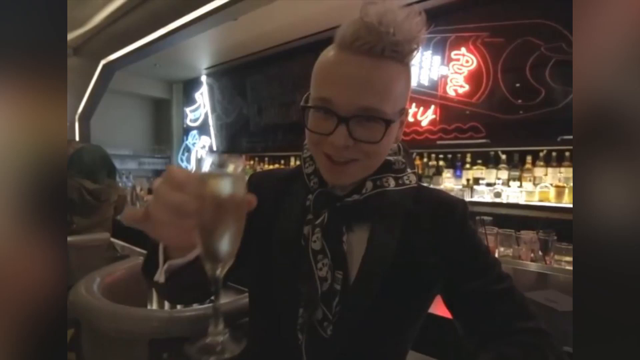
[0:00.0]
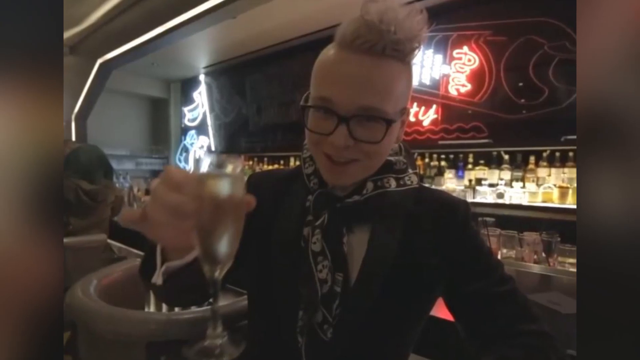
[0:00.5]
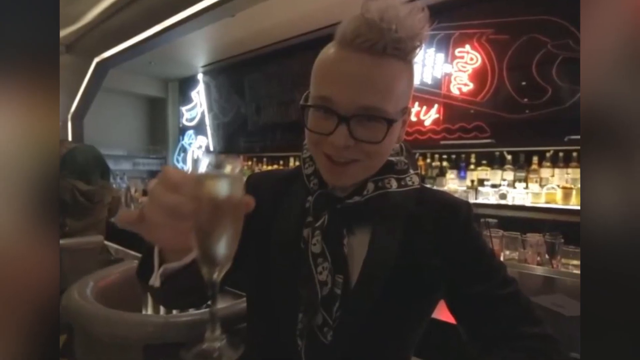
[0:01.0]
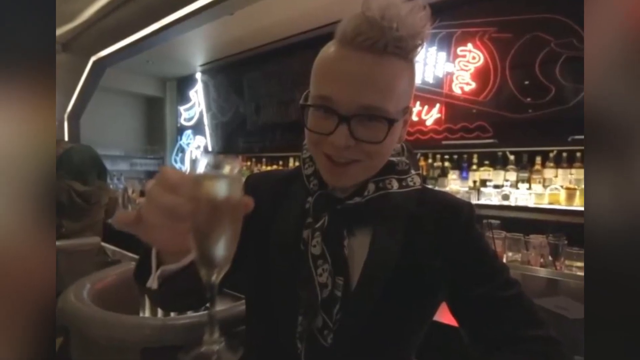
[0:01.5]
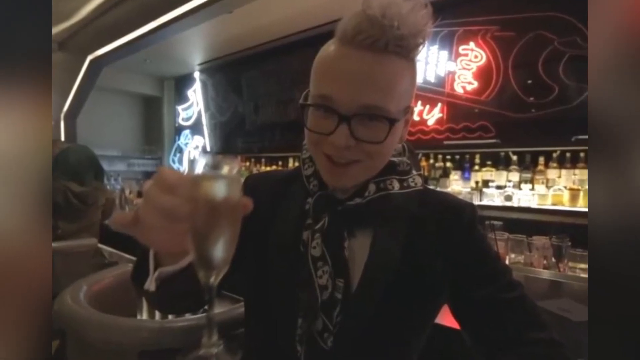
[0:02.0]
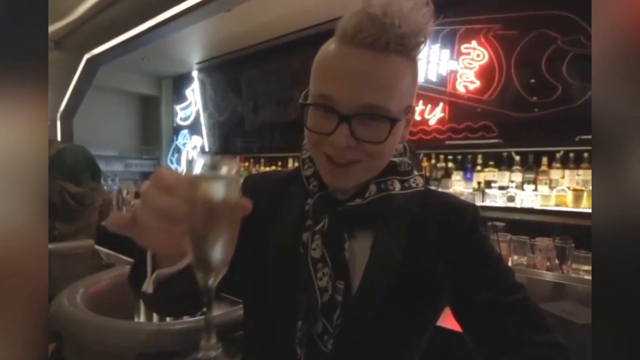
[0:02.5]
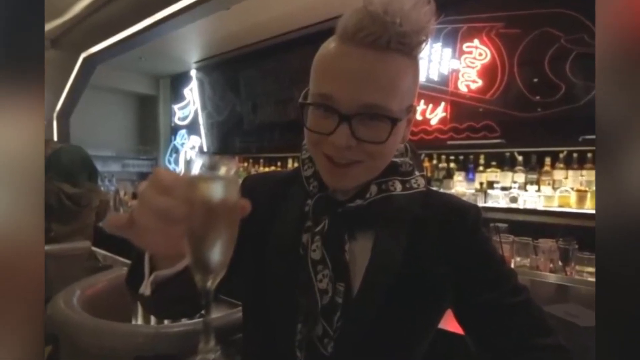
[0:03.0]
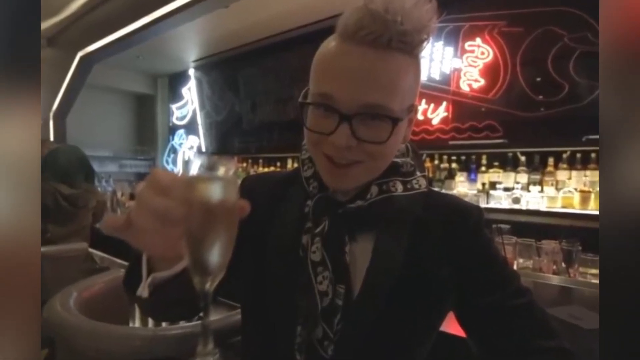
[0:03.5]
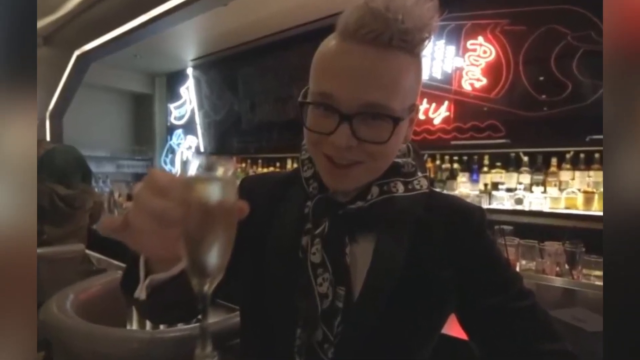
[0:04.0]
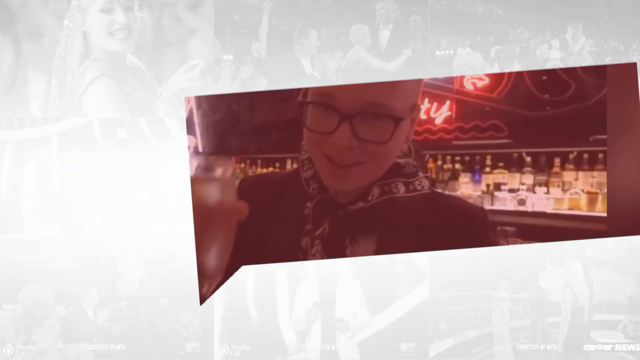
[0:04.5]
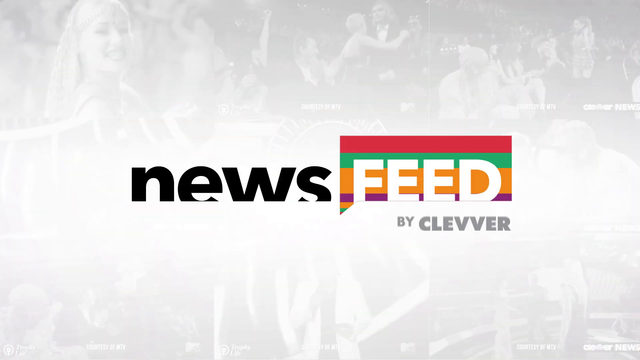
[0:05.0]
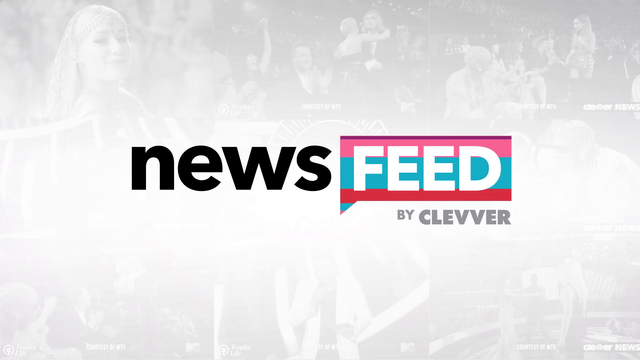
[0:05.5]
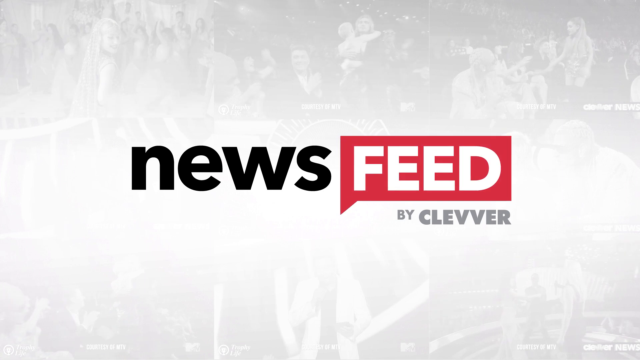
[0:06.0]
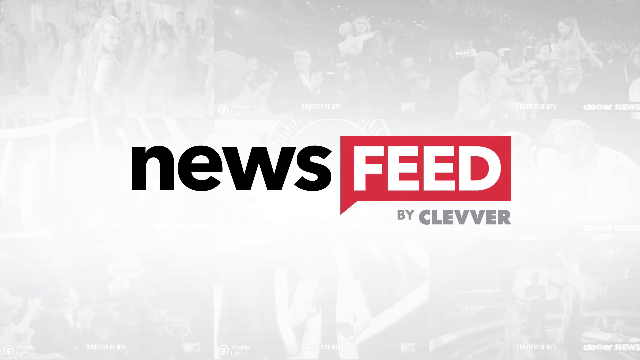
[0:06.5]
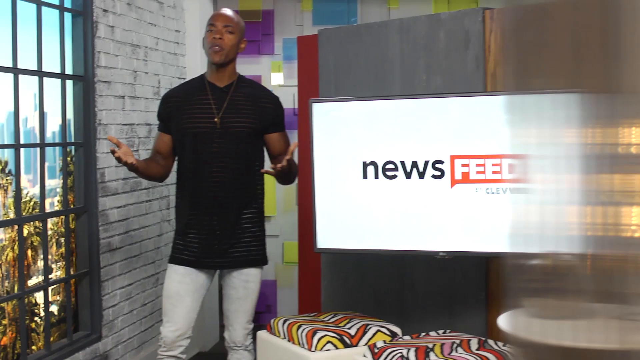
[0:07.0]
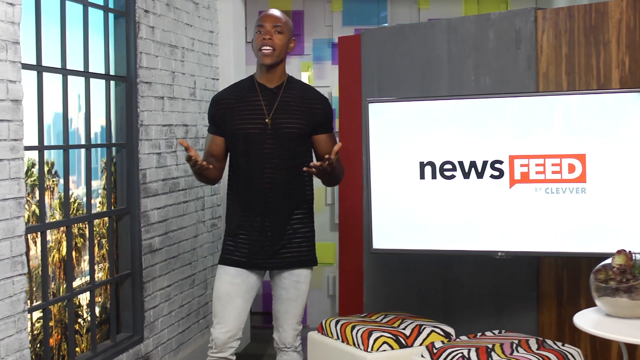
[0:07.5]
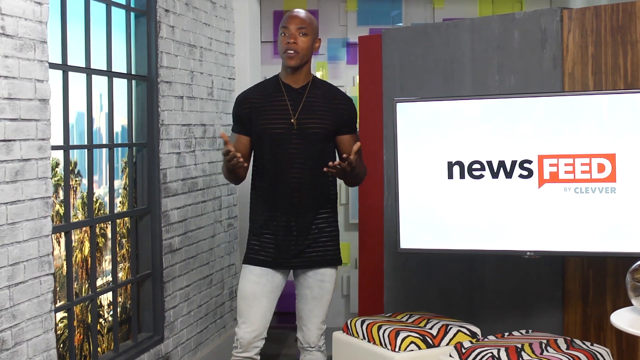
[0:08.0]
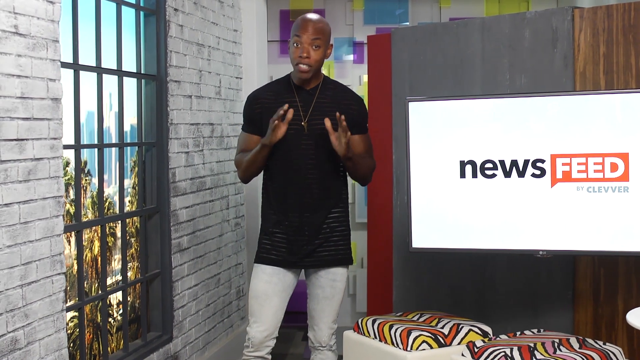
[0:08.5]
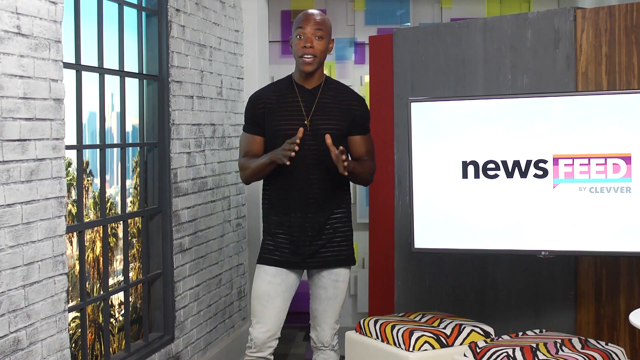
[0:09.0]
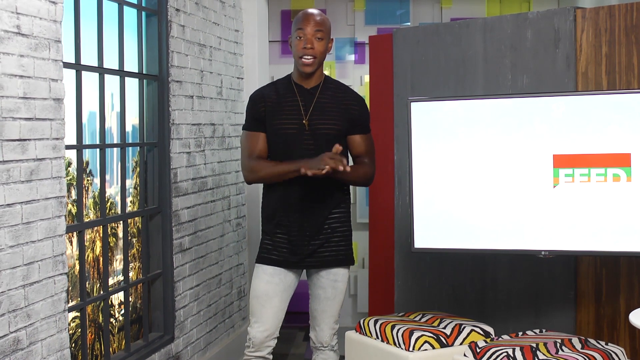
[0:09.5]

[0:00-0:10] The camera pans in slowly and closely on a person with a blonde mohawk who looks like they may be in a bar, holding up a glass of clear liquid in what looks like a little champagne flute. The person wears a dark blazer, a black and white scarf or kerchief tied around their neck, and black-framed glasses. Neon lighting is visible in the background. That gives way to an all-white graphic: in black lowercase letters it says "news," then in a red text box, in white capitals, "FEED." Underneath, in smaller gray text, it says "BY CLEVER," with "CLEVER" in bolder capitals. Next comes a graphic with that same background on a TV screen to the right and a man standing to the left of it. He is young, Black and bald, and wears a short-sleeved black t-shirt, what look like white pants, and a gold chain. To his left is a white brick wall with a gridded window through which the outside is visible. He appears to be giving some kind of news report.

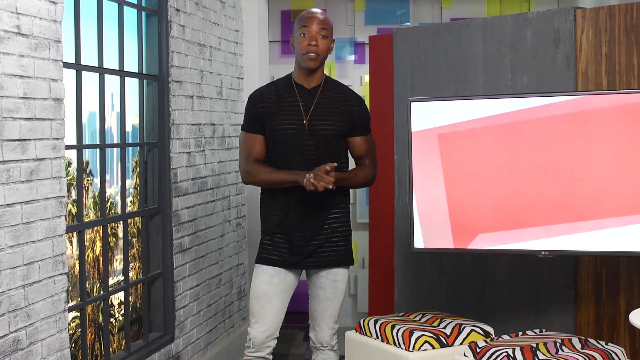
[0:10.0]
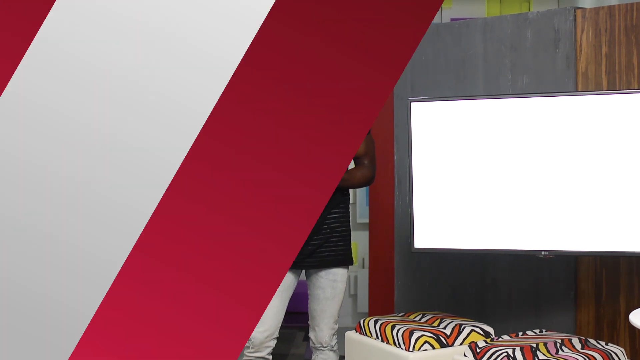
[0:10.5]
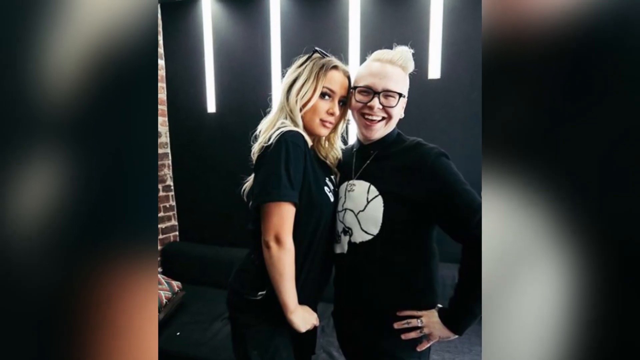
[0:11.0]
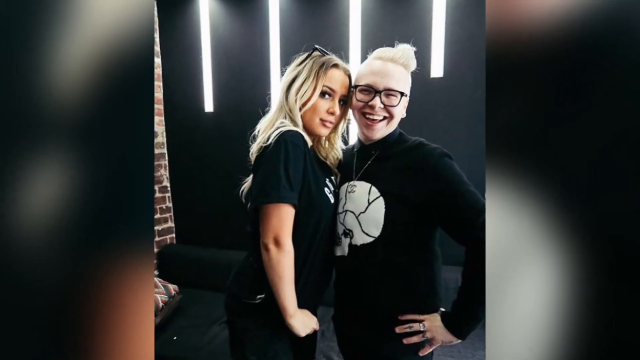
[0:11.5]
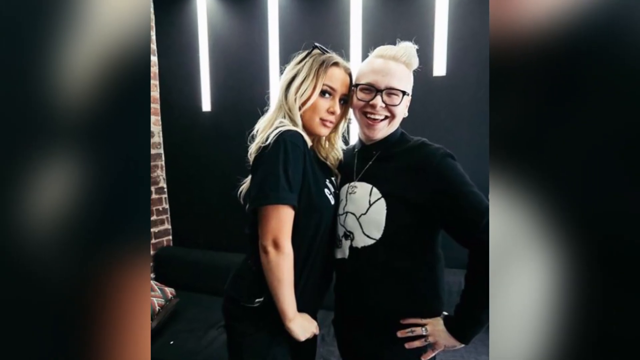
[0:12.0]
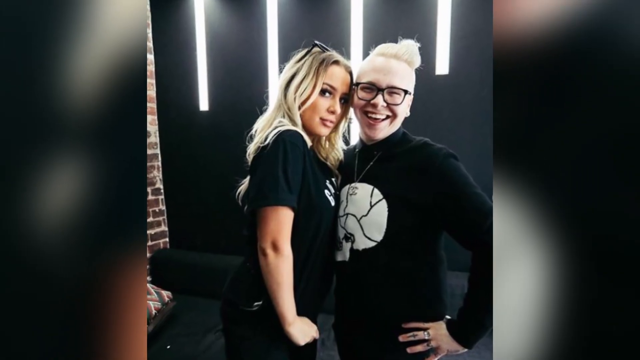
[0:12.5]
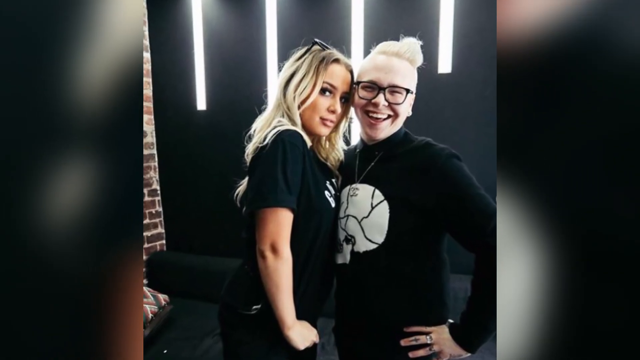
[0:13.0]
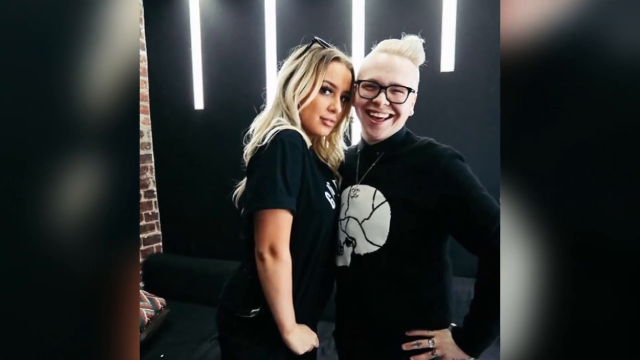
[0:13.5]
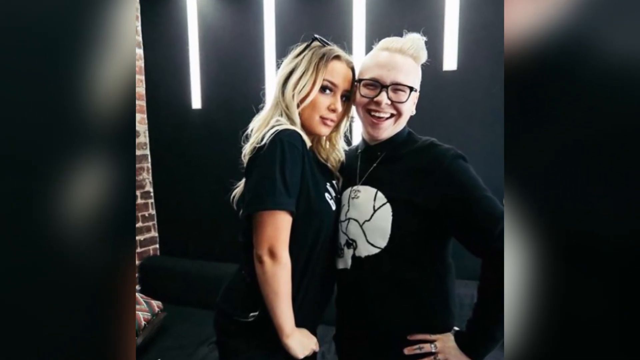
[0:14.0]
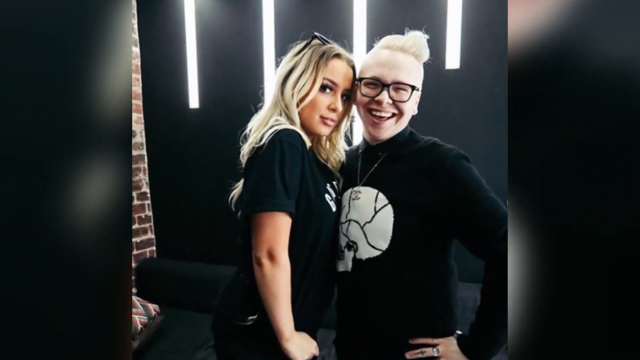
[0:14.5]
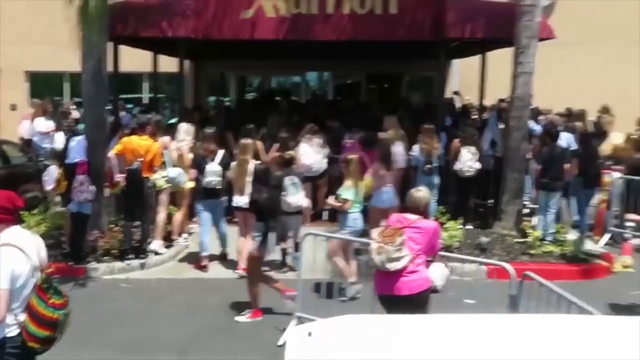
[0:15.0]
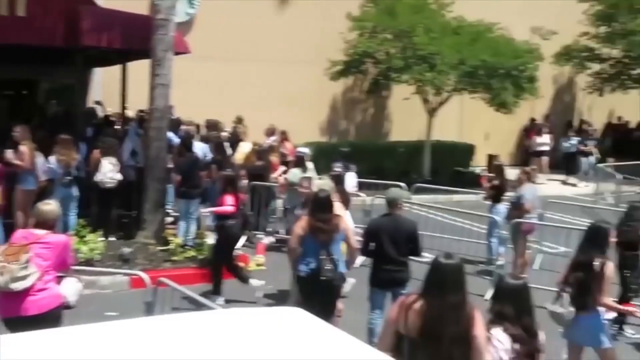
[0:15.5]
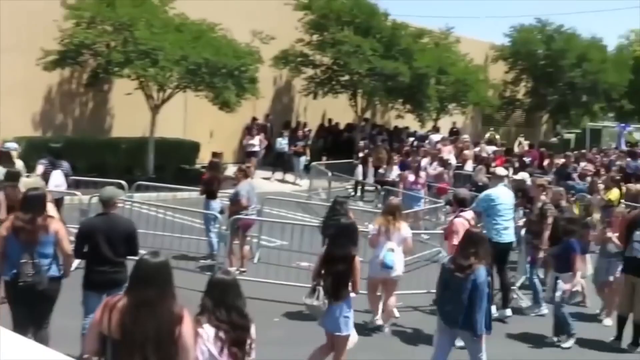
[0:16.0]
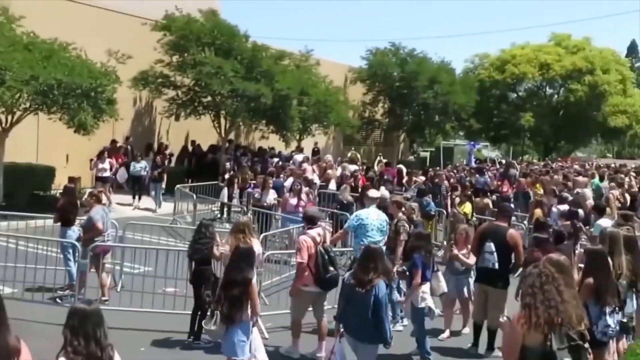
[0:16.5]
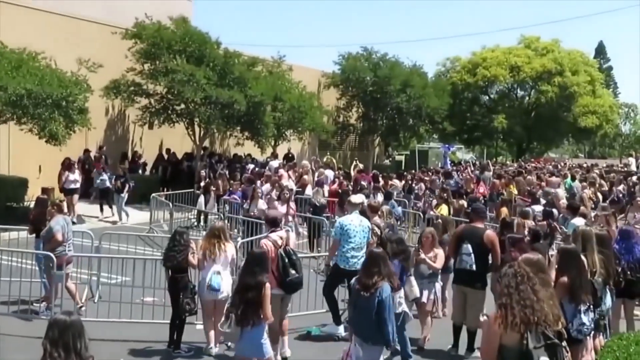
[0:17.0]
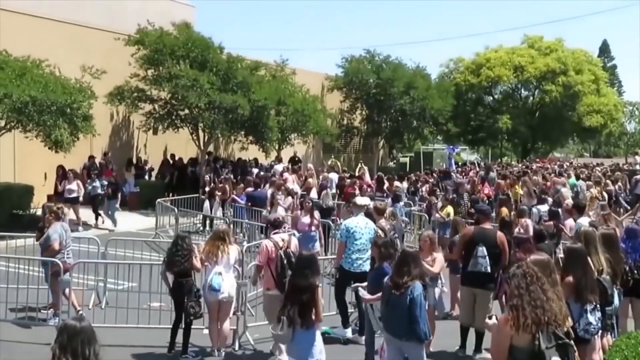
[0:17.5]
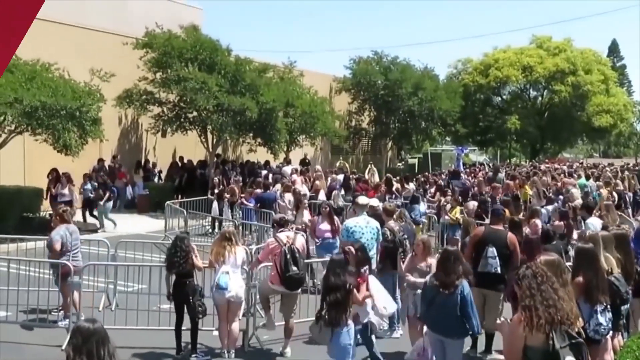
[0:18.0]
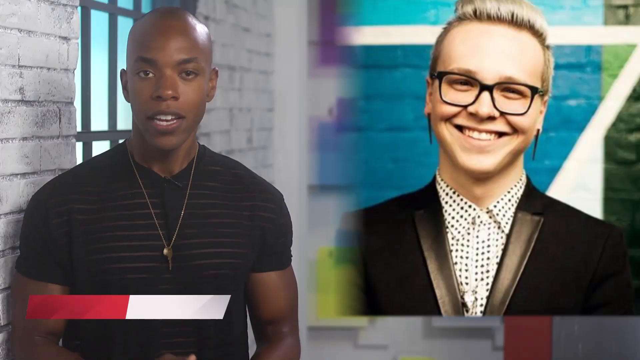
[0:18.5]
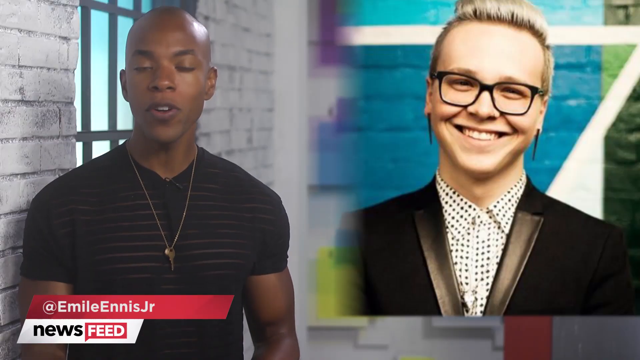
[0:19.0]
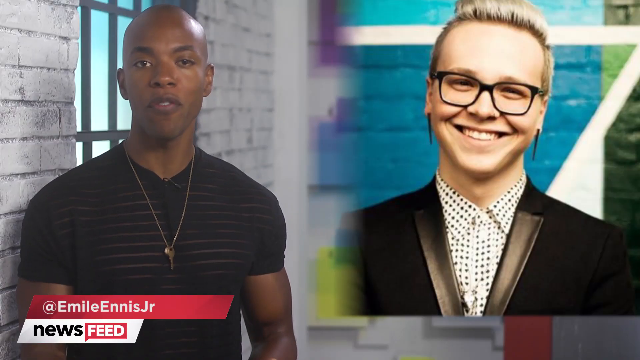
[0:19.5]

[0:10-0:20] A new graphic shows the same person with the blonde mohawk, this time standing next to someone else. The girl on the left has long blonde hair, sunglasses up on top of her head, and a short-sleeved black t-shirt with some white writing; she is close to the person on the right and angled so her chest is toward them. The person on the right is angled a little more toward the front and still wears the black-framed glasses, now with a long-sleeved black shirt bearing a white circle, almost like a volleyball, with unusual jagged black lines in the middle. Behind them is a black wall with four little vertical neon bars on its upper half. The view then switches to a street, panning quickly across a large crowd of people, and then returns to the pair, apparently focusing on the person with the blonde mohawk.